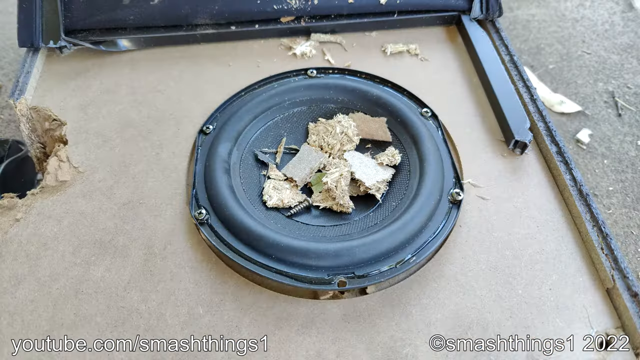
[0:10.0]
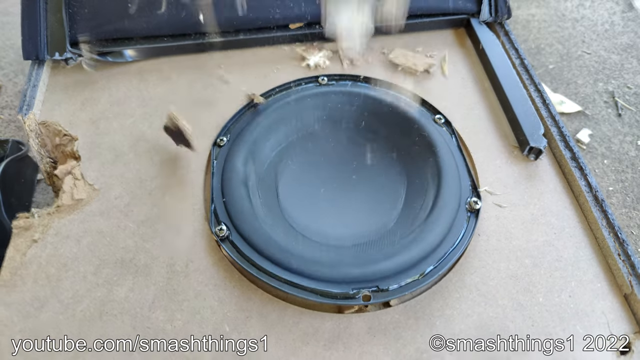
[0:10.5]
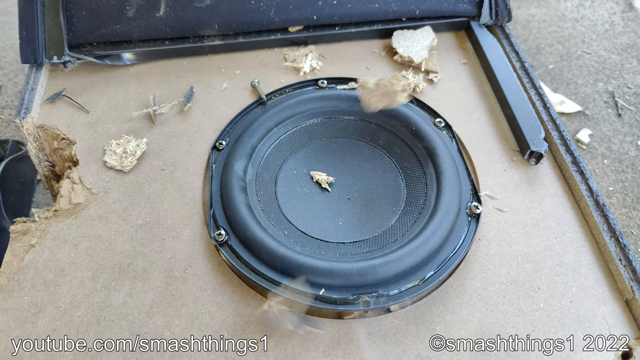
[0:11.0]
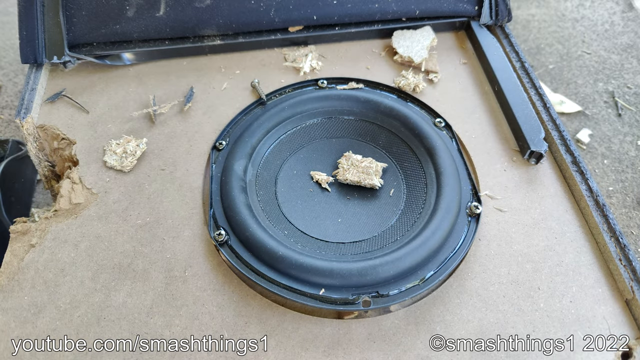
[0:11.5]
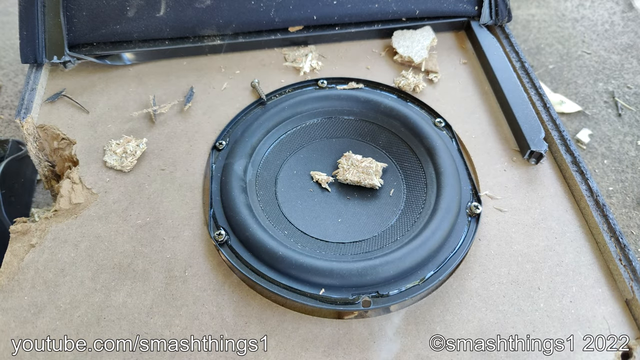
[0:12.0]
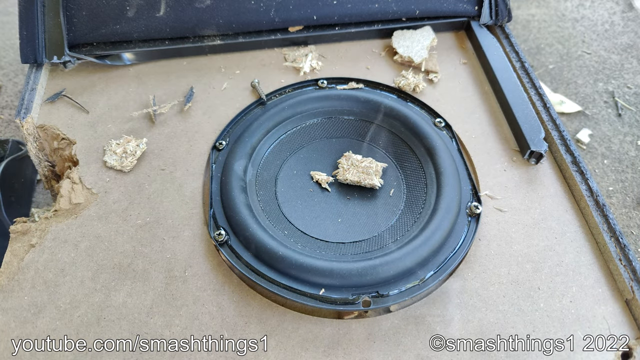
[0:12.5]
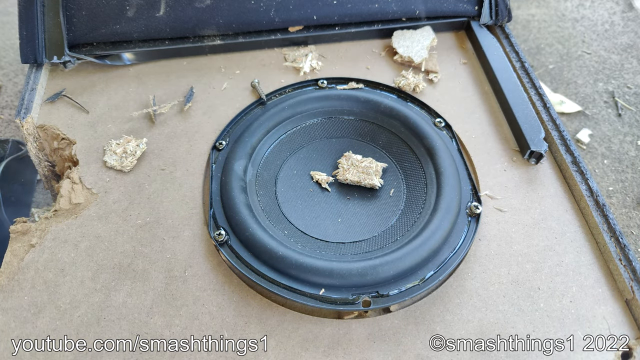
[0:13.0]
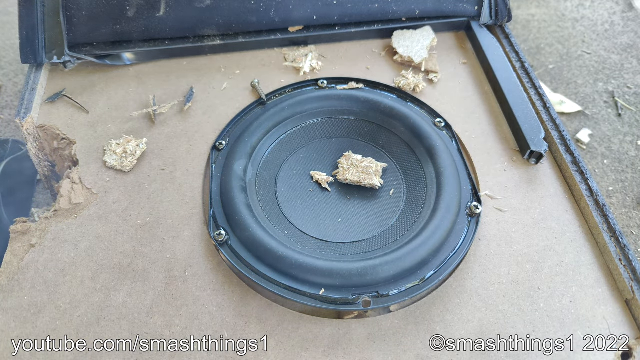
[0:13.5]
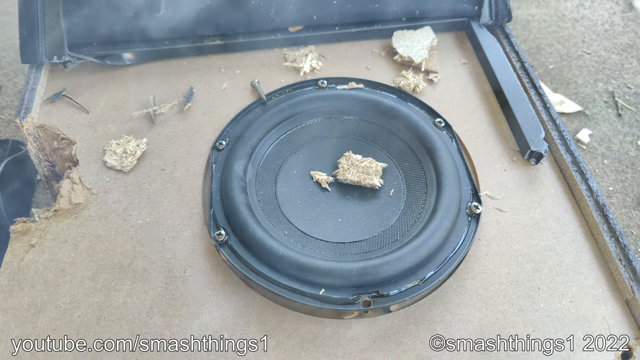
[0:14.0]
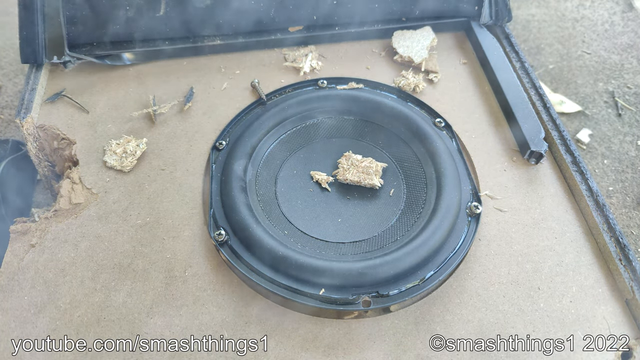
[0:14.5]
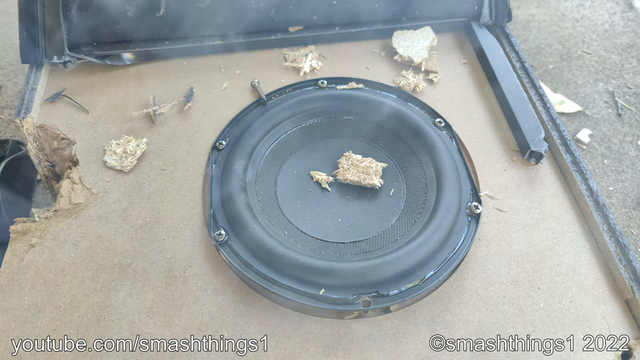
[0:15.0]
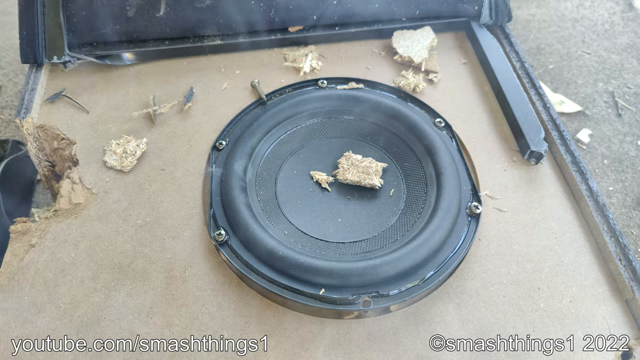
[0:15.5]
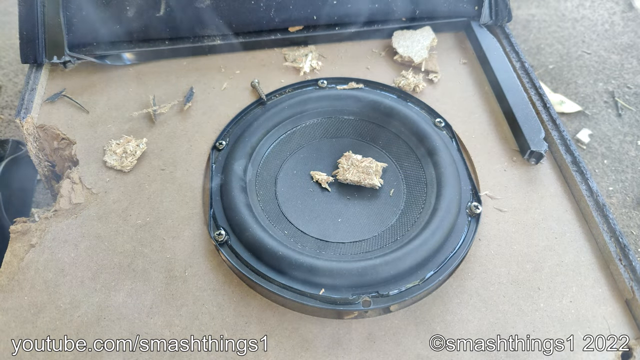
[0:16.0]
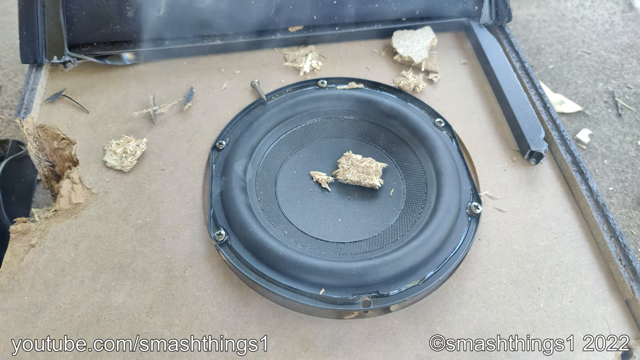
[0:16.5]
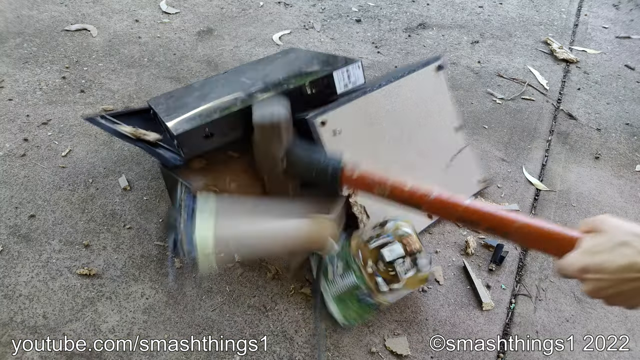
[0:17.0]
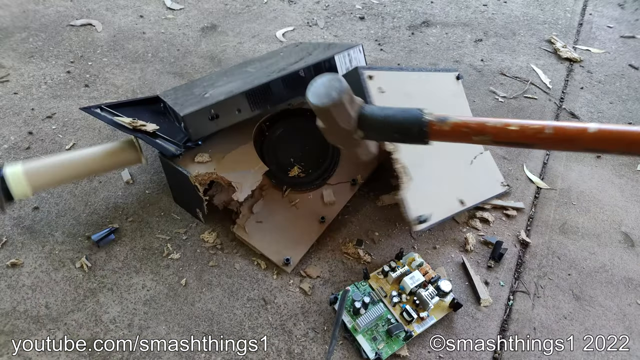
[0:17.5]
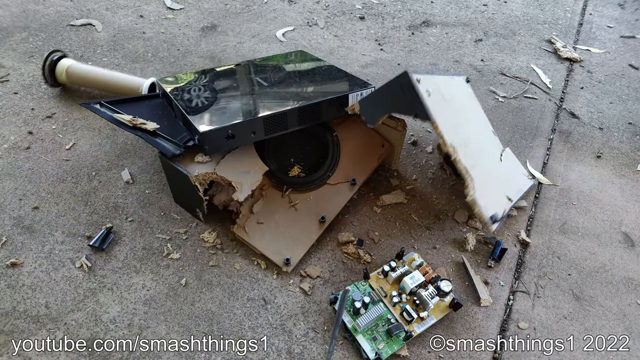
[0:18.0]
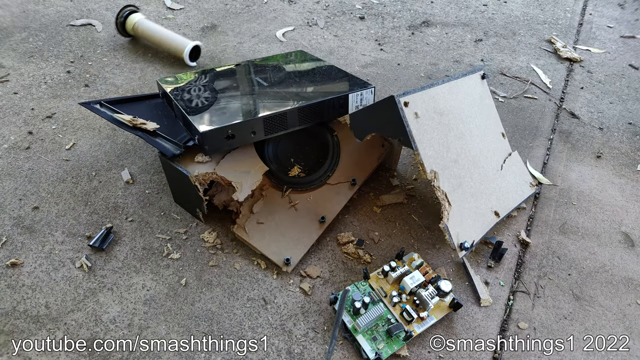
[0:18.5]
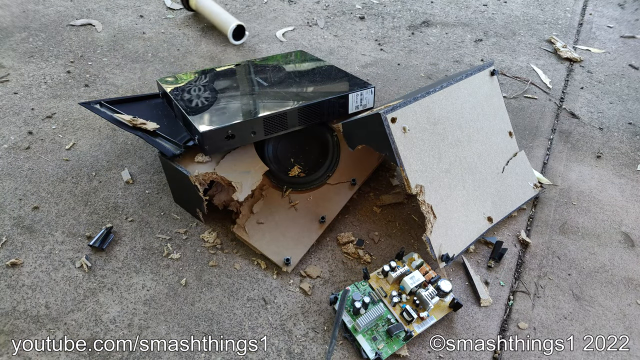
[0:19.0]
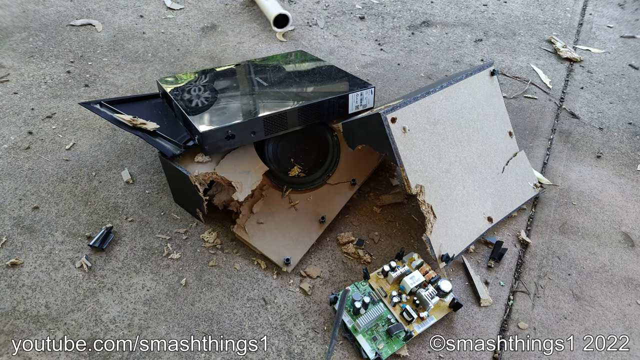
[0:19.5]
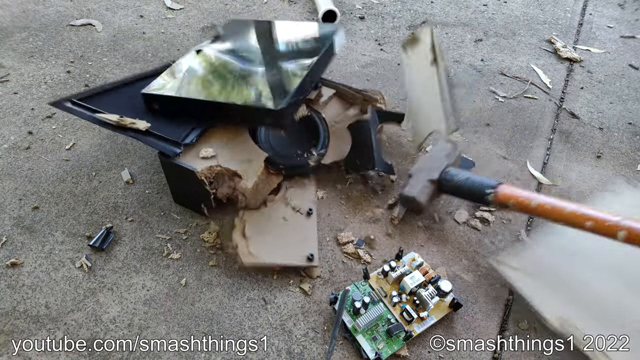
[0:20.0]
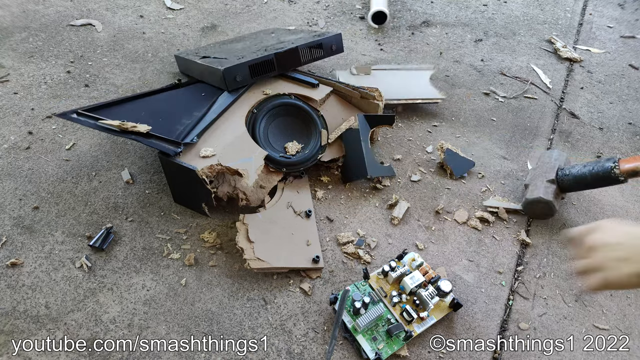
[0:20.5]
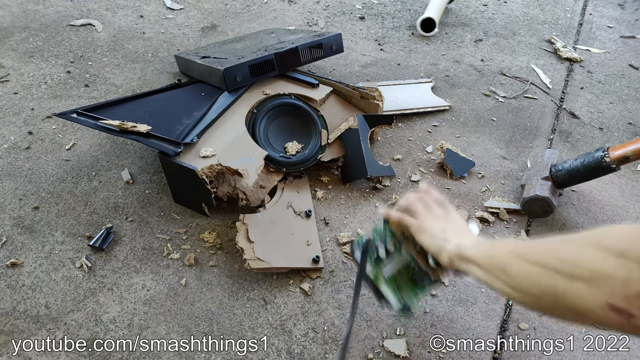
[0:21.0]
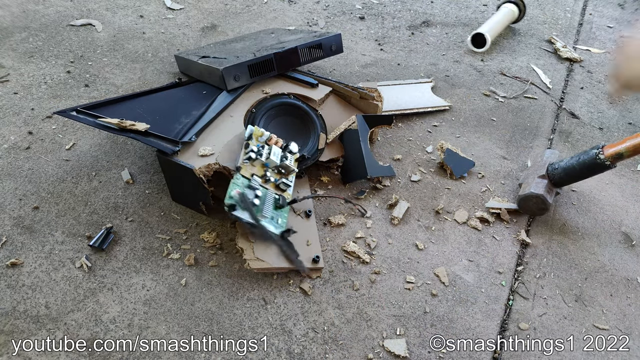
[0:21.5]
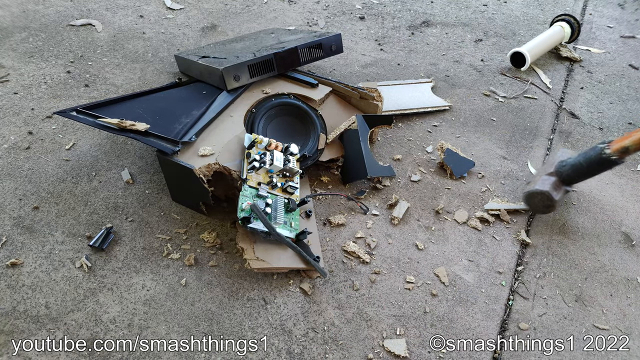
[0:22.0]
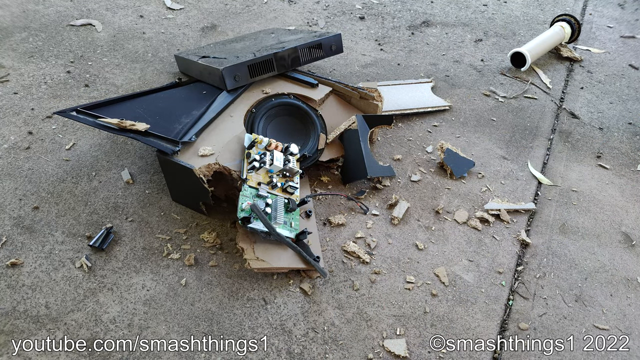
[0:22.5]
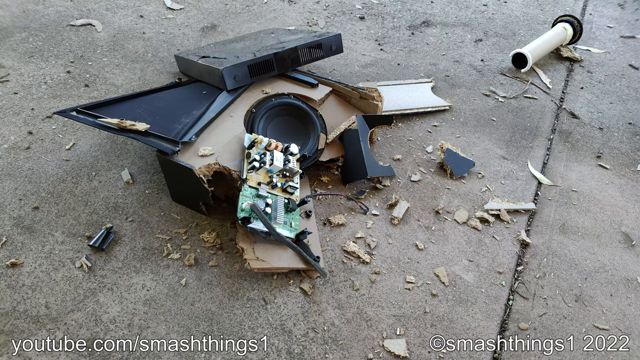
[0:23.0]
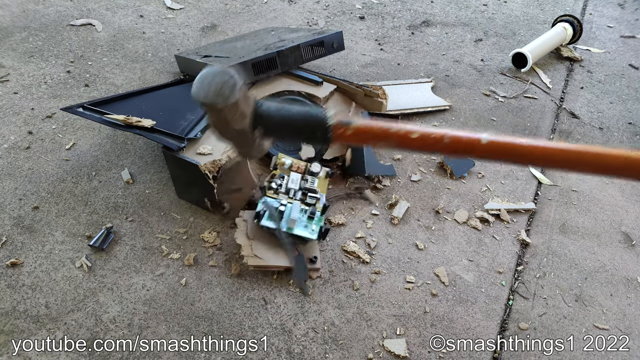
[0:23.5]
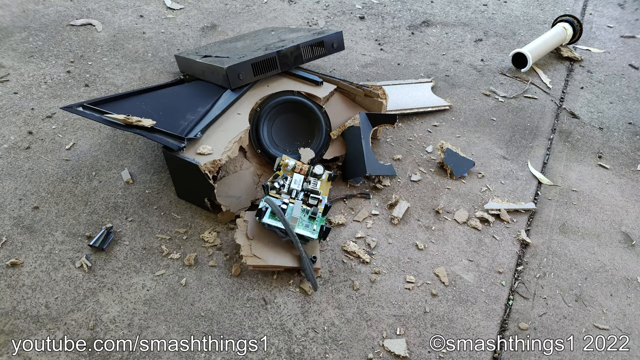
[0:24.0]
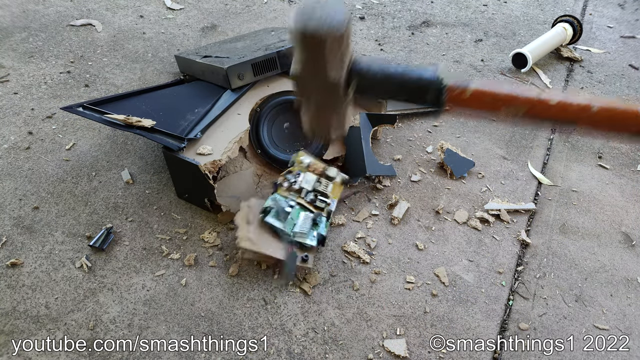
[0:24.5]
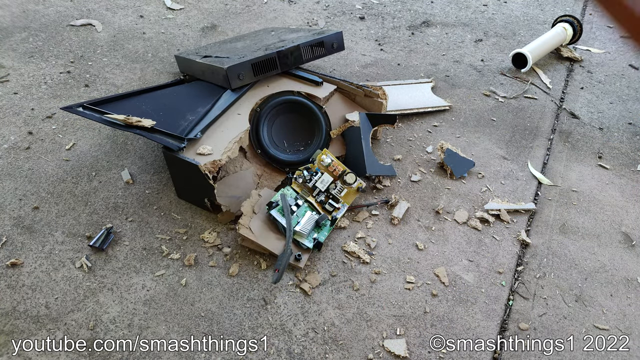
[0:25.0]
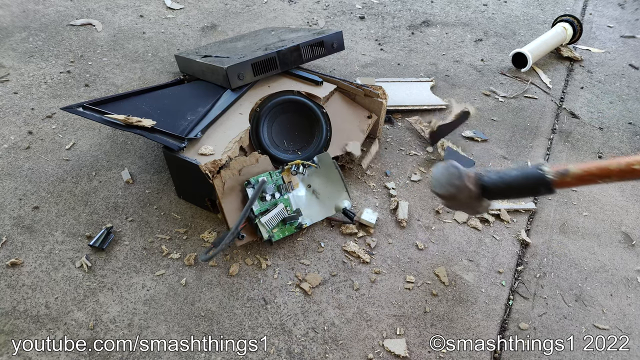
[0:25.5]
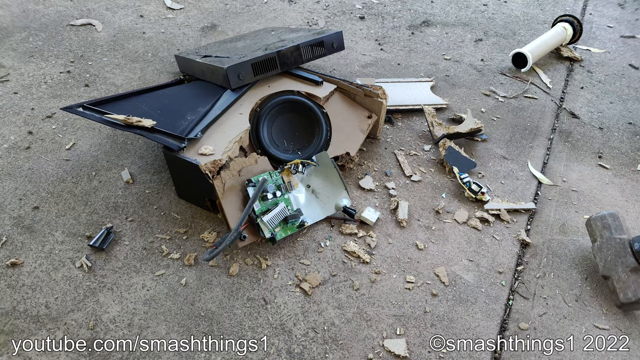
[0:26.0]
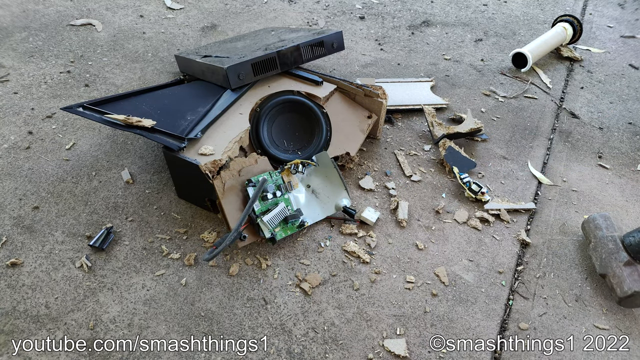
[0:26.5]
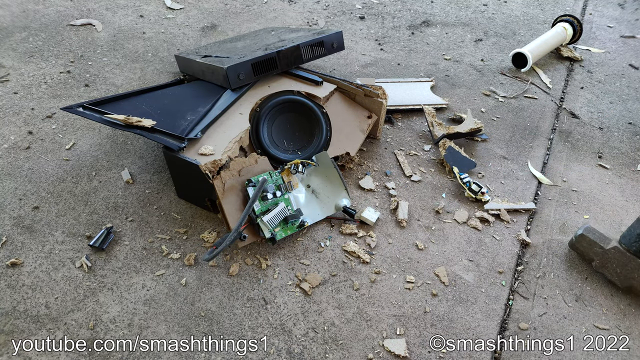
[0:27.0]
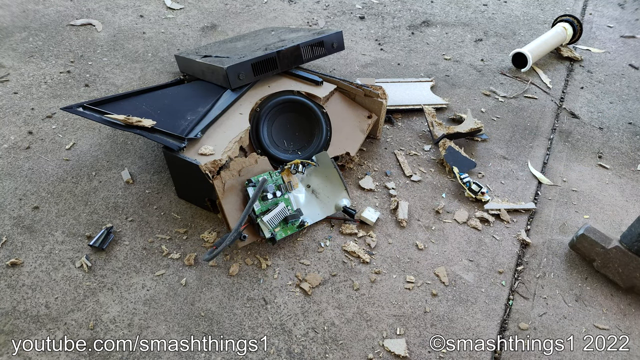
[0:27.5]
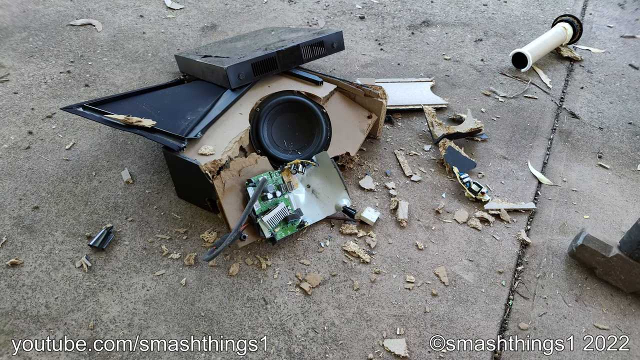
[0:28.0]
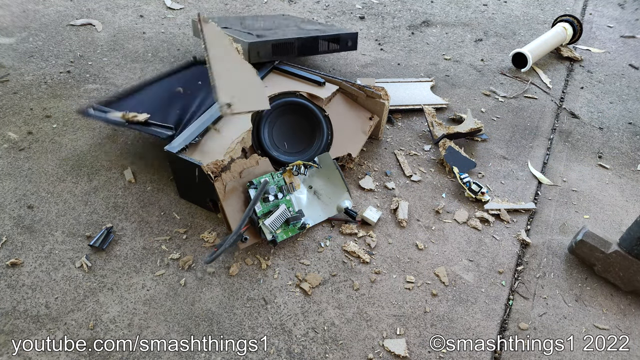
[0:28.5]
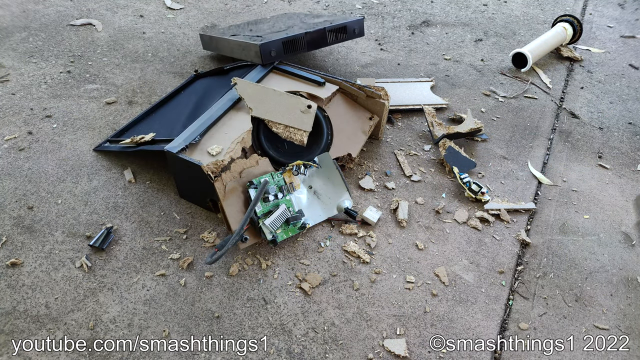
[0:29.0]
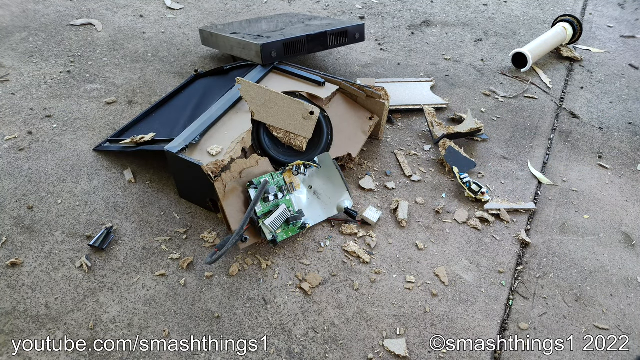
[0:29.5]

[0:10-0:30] A computer speaker is laying outside on the cement ground after a man has thrown it down. At the beginning, the speaker looks like it is starting to smoke, with a lot of smoke coming out of it. The person keeps hitting everything with a sledgehammer, possibly in anger, and many busted-up pieces lie on the ground, including a lot of broken pieces of particle board. Several metal screws are visible, some of them laying on the ground, and there are a bunch of leaves on the ground outside. One piece, a cylinder-type piece from inside the busted-up speaker, is rolling away. At one point he throws one of the pieces back into the center so he can hit it with the sledgehammer again.